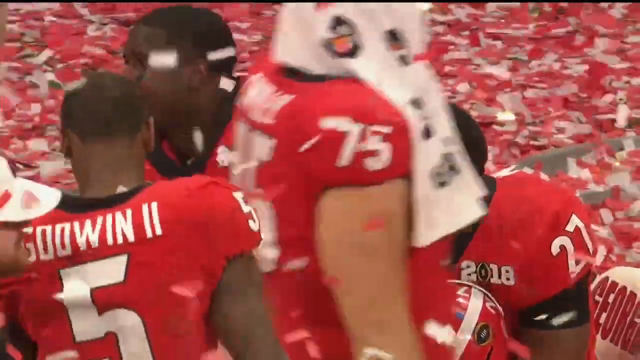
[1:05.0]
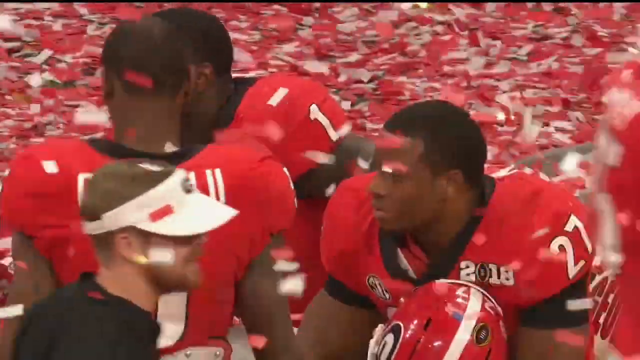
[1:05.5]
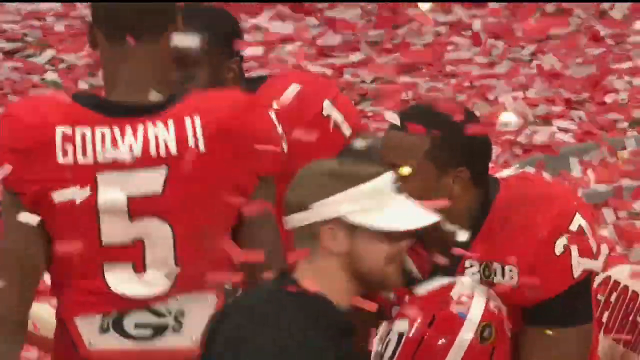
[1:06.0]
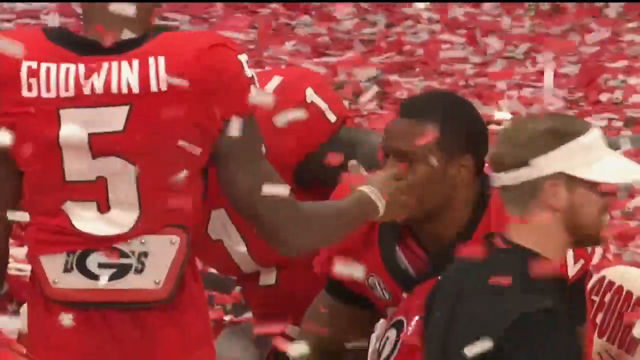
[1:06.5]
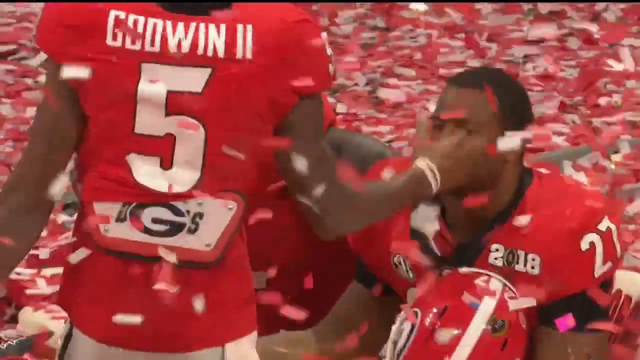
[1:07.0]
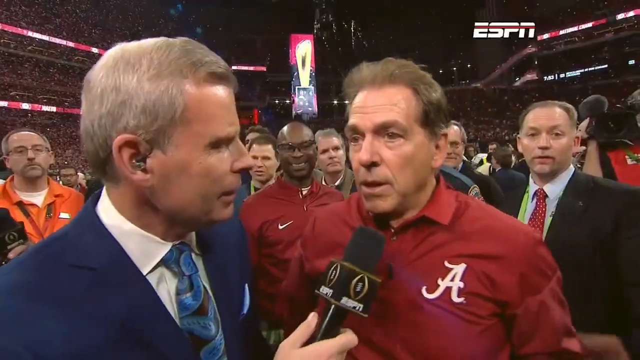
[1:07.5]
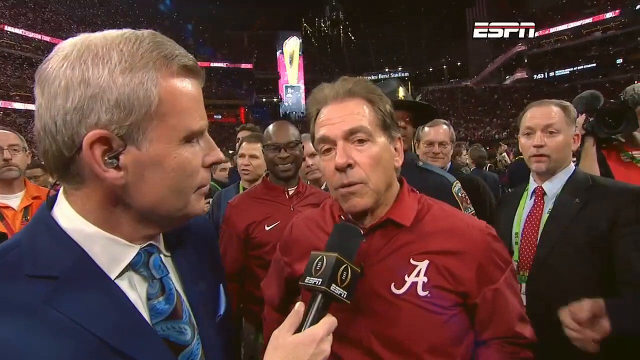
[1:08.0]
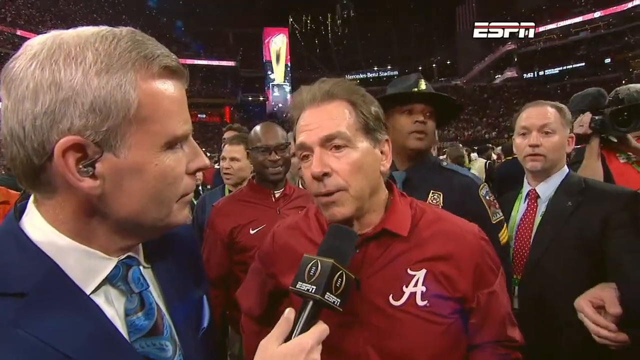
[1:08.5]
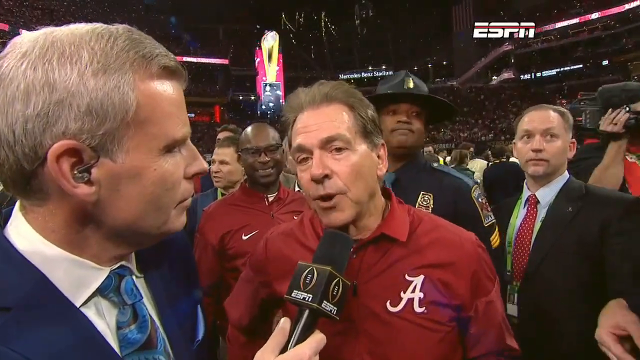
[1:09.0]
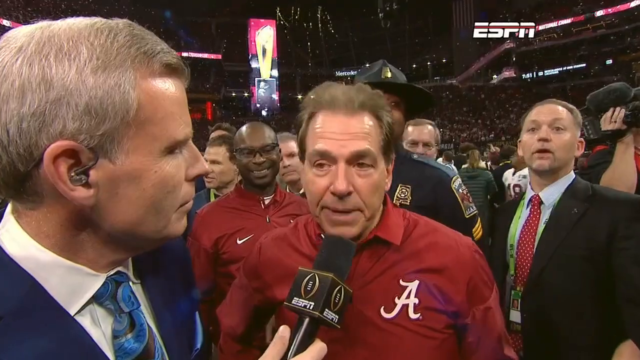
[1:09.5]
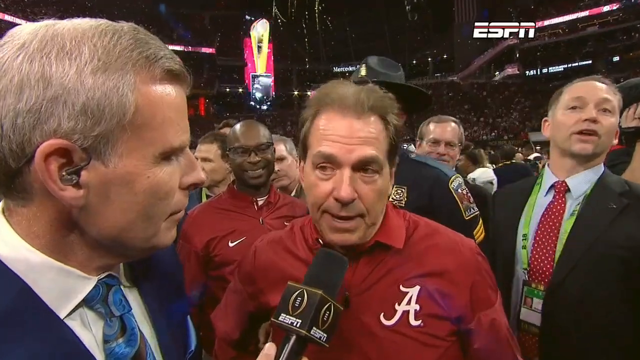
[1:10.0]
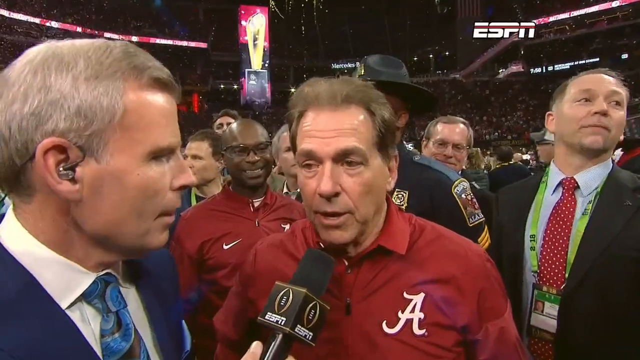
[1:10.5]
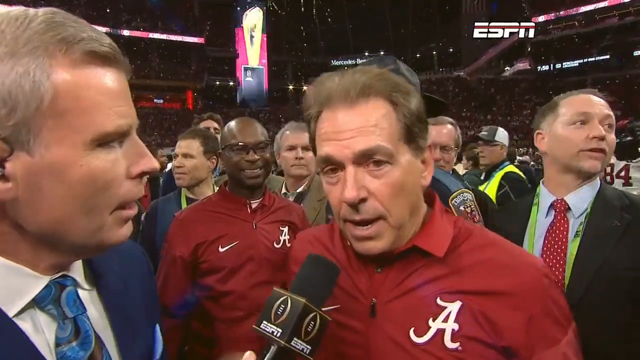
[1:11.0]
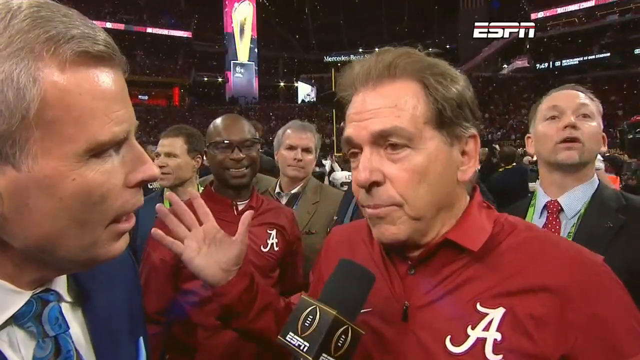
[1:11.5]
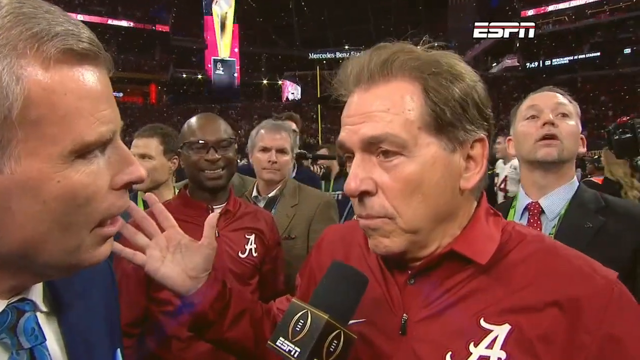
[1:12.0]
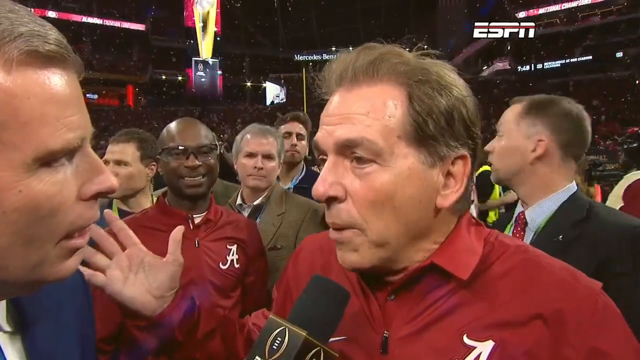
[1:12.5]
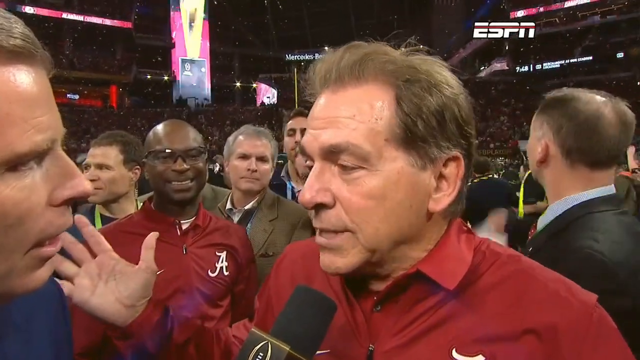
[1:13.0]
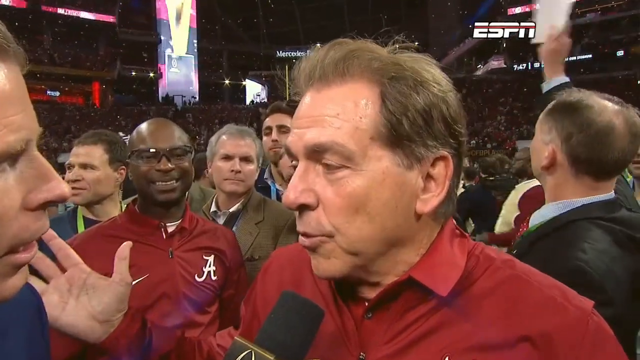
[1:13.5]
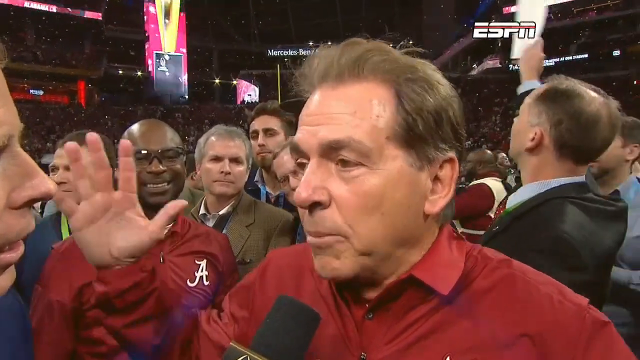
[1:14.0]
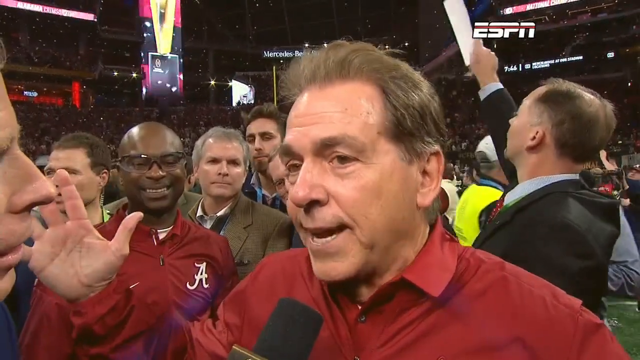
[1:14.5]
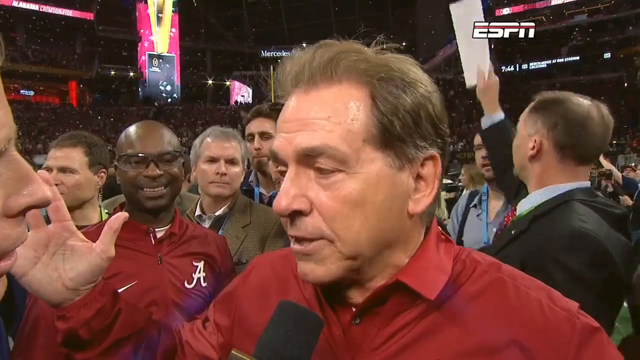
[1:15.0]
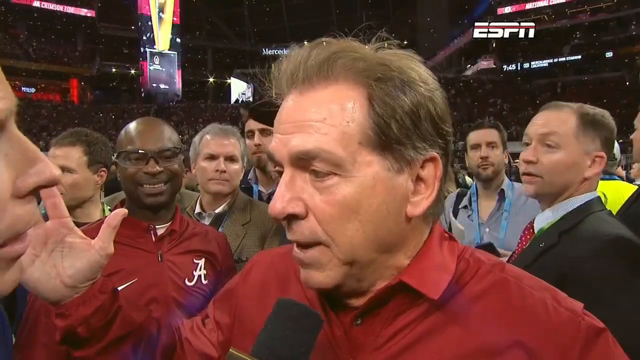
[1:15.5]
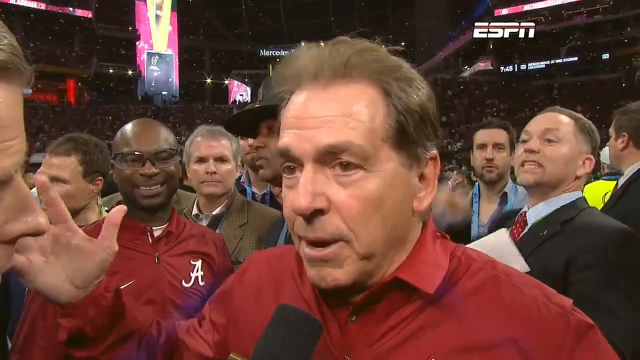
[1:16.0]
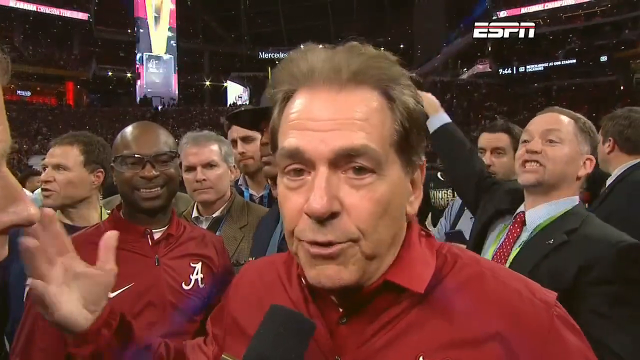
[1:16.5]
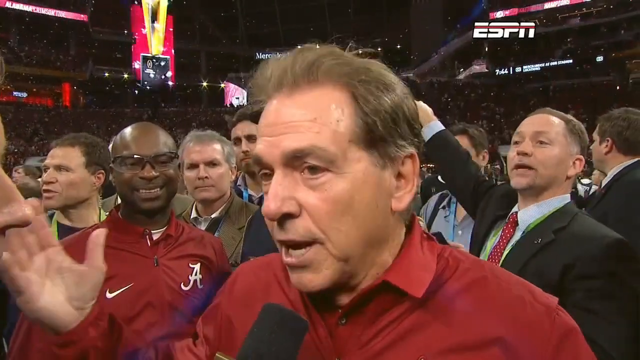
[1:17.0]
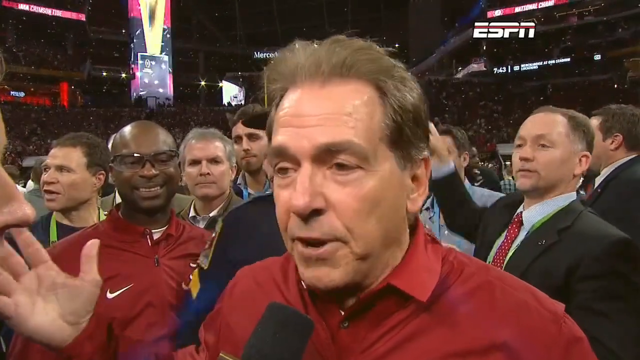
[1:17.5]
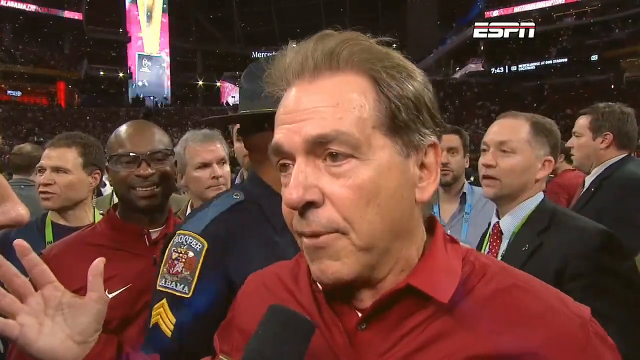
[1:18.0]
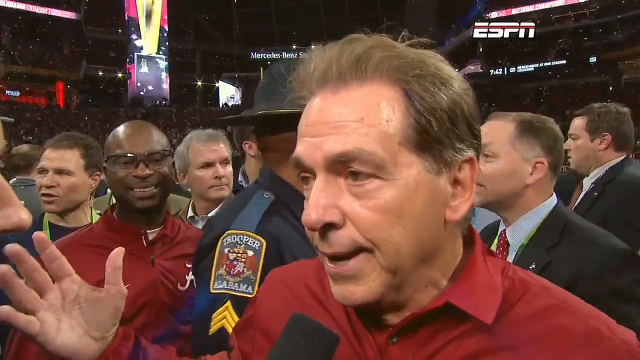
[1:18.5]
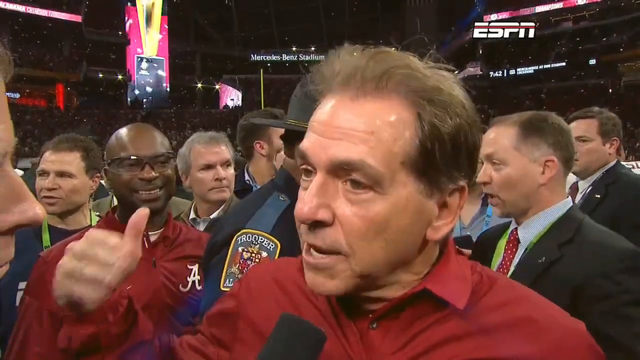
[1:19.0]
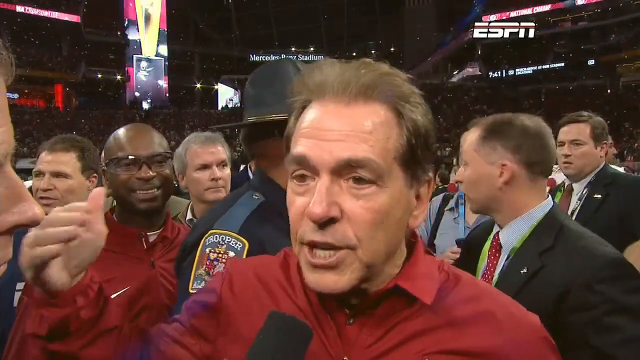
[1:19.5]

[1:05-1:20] The screen flashes between Nick Saban's interview with an ESPN commentator and Georgia players who seem disheartened. Red and white confetti is all over the place. There is a lot of hustle and bustle around Coach Saban, with many people behind him, such as videographers, other staff, commentators or players. Everyone is still on the field.